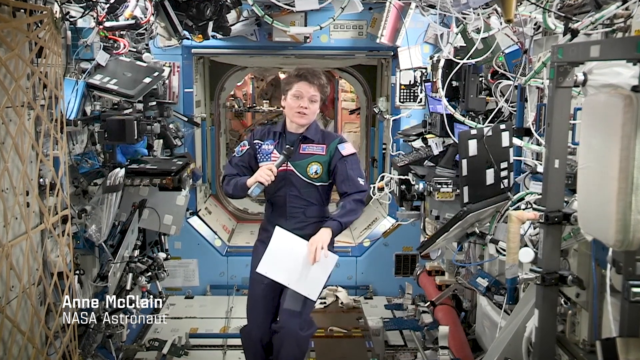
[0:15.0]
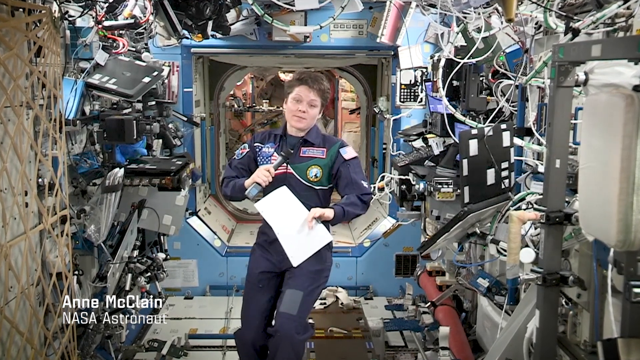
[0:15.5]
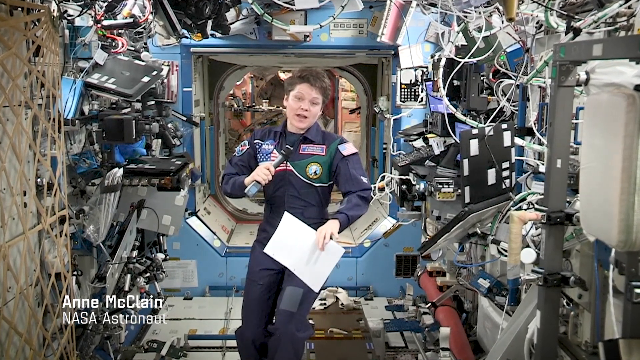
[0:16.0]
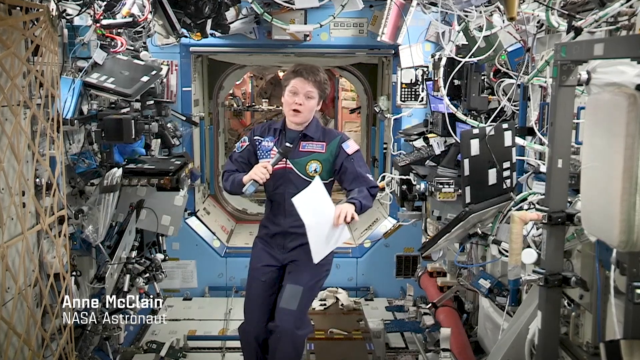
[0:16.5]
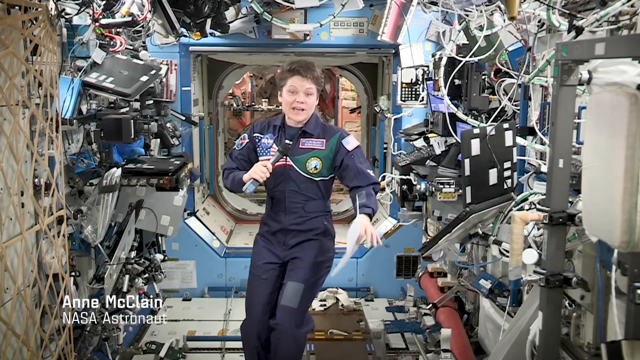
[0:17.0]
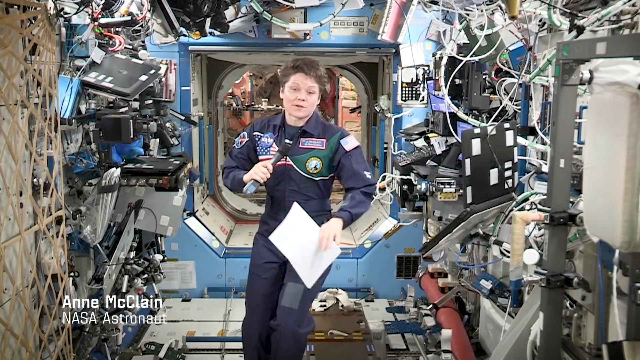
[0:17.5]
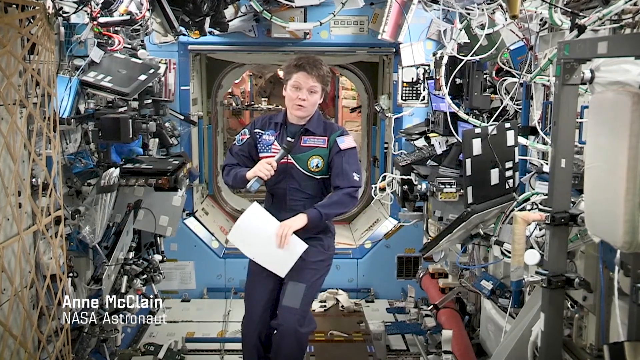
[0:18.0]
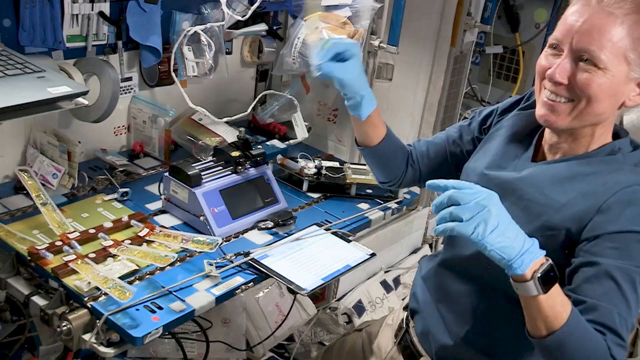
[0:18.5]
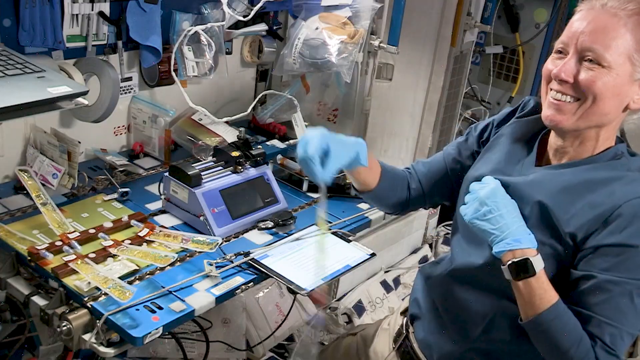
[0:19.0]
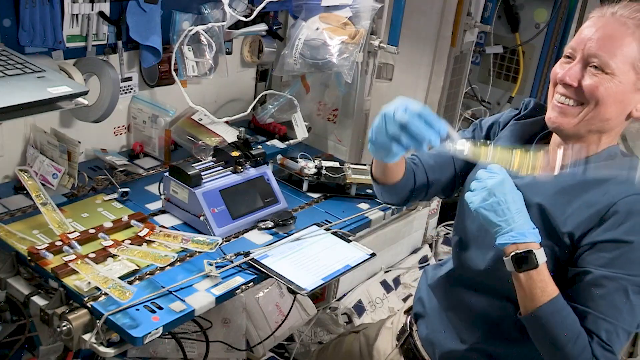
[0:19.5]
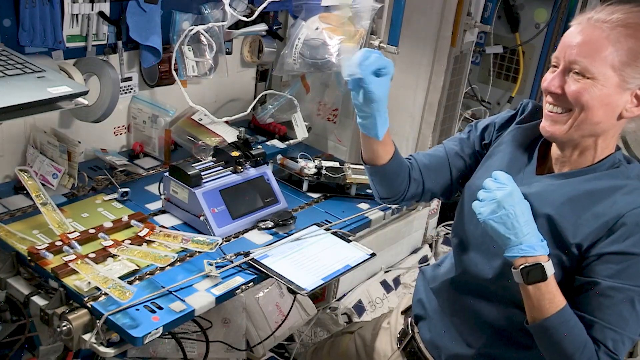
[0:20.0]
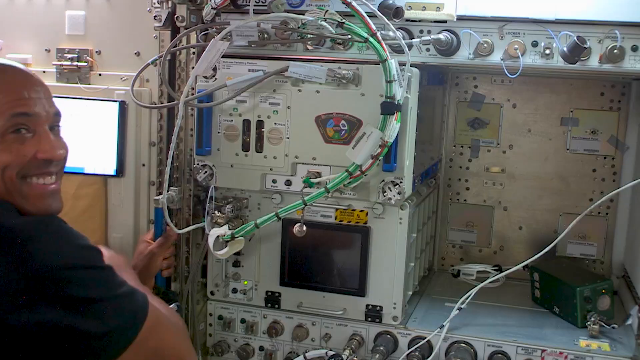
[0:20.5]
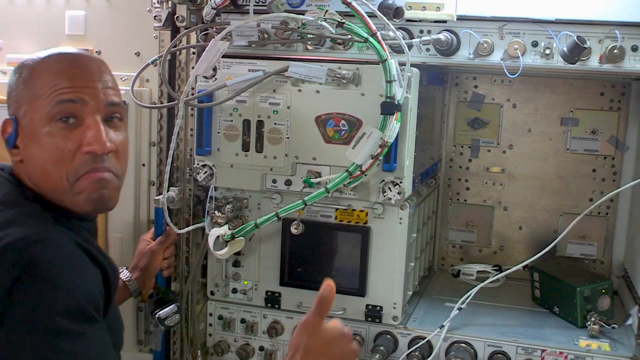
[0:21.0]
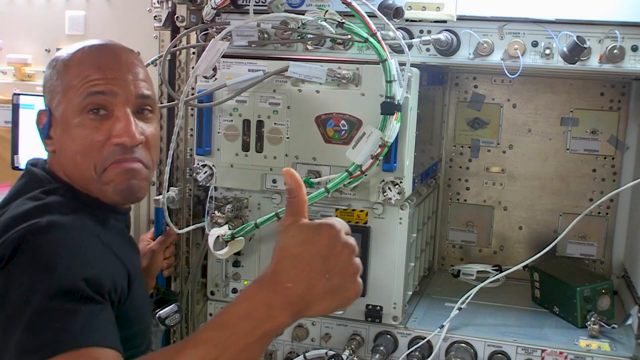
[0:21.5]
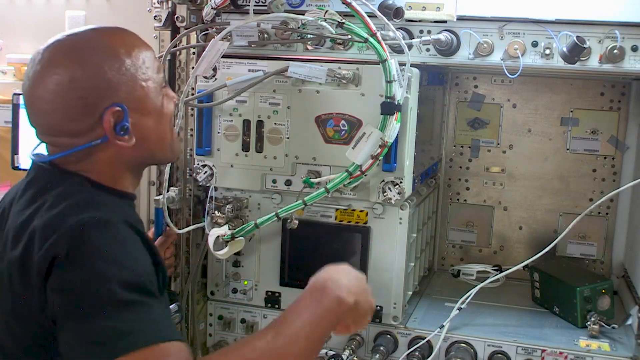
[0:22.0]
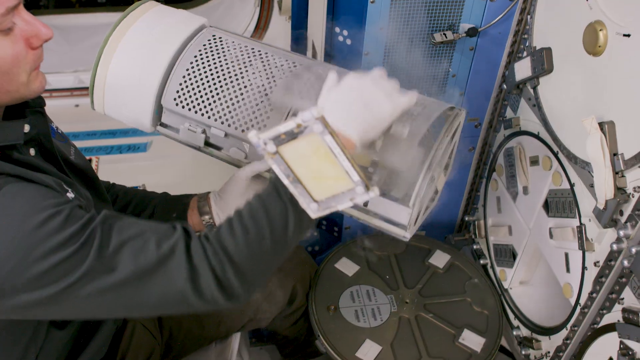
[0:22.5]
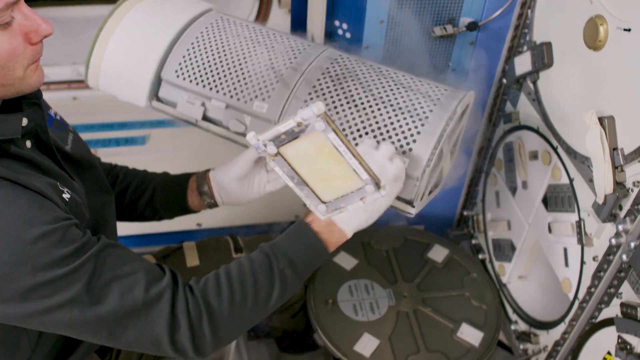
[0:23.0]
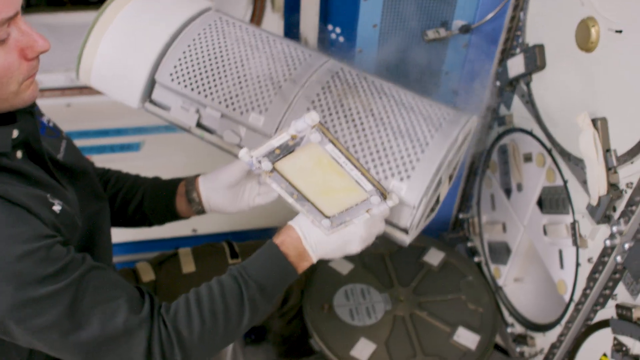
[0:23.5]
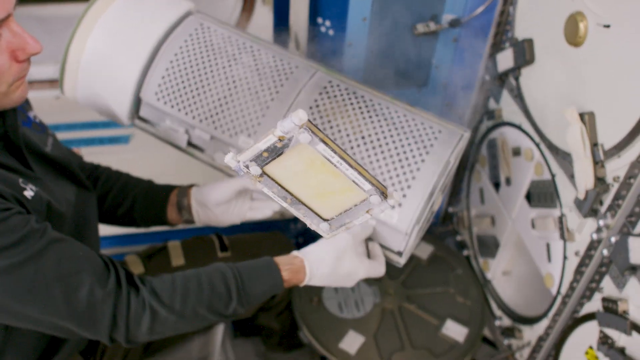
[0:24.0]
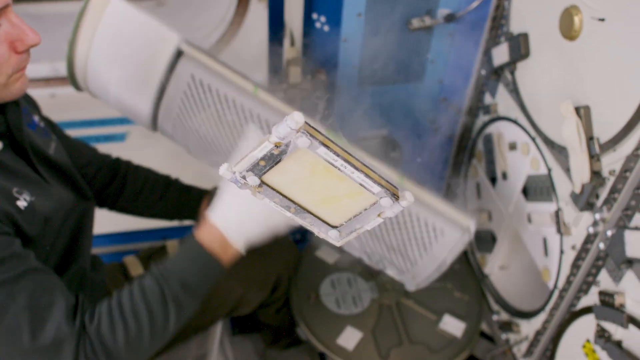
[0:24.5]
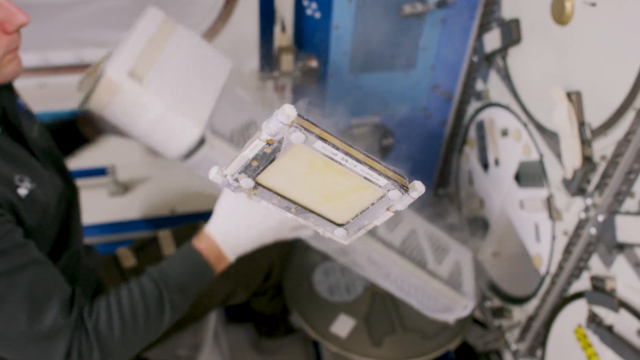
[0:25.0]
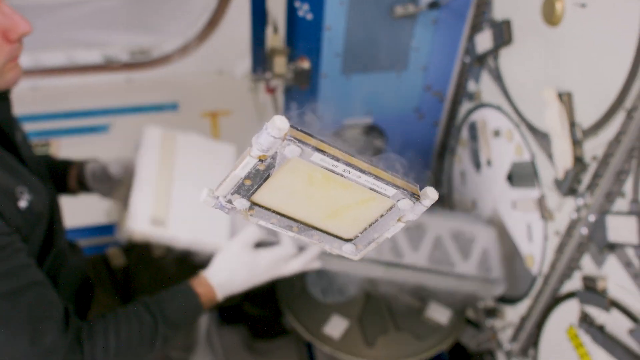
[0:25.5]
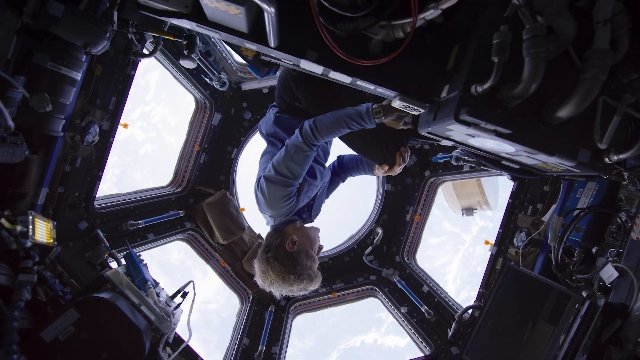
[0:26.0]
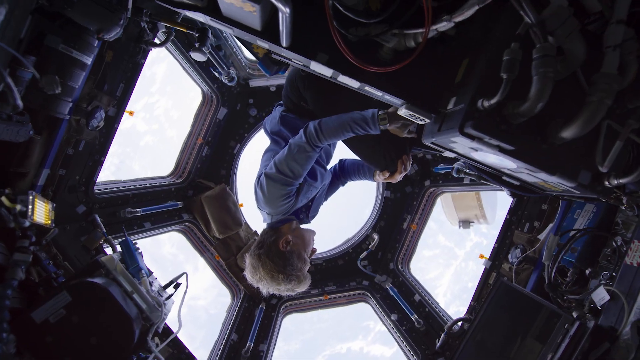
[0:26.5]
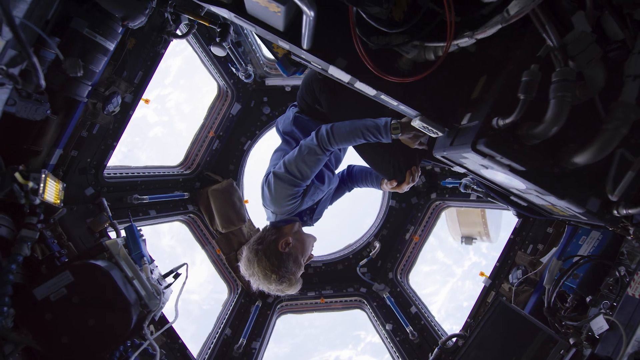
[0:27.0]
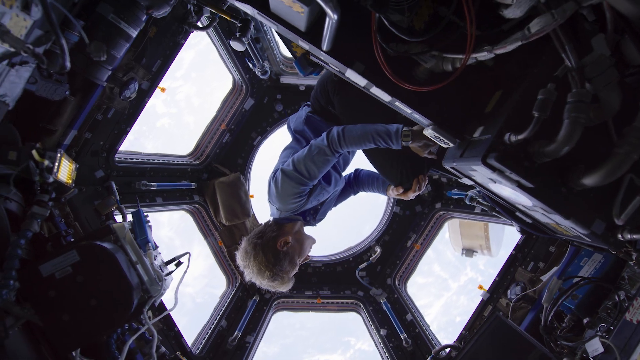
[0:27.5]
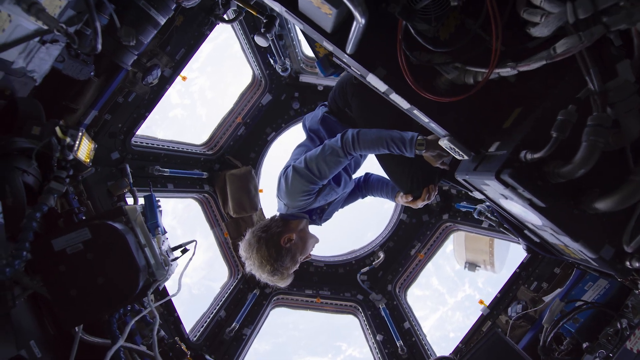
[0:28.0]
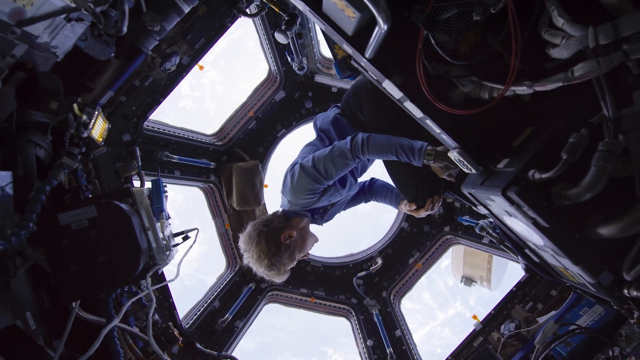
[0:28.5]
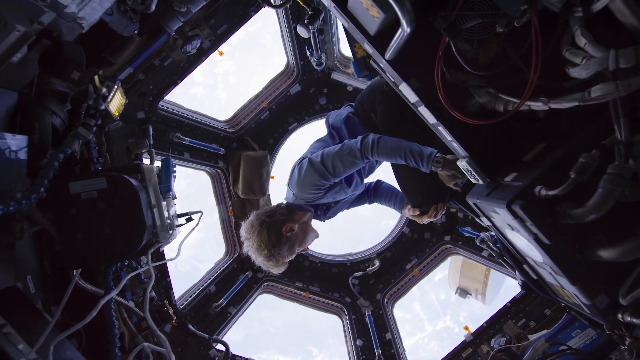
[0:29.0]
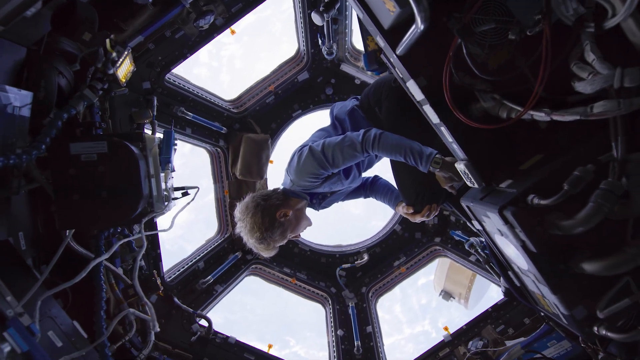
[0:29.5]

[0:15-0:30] The video cycles through various astronauts on the space station going through activities. It starts with an astronaut named Anne, whose name is displayed on the screen; she talks toward the camera holding a microphone, as though giving a report or maybe news feedback. It then pans through various astronauts: a woman twirling a piece of equipment in low gravity and smiling, and a man working in front of some electrical equipment who gives a thumbs up. It then shifts to a young woman changing out a filter; the filter is pulled out of another piece of equipment and floats toward the camera with smoky, cold gas coming off of it.